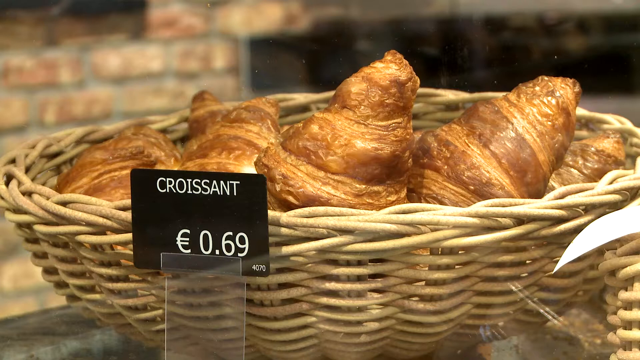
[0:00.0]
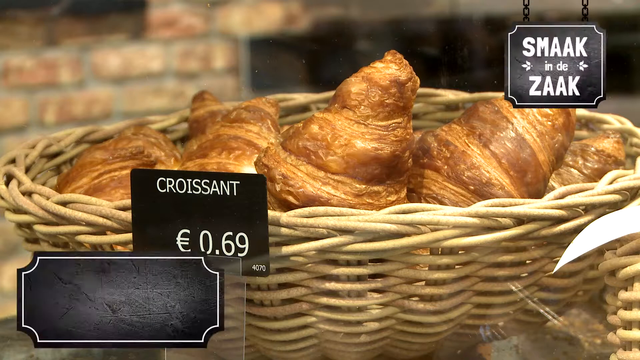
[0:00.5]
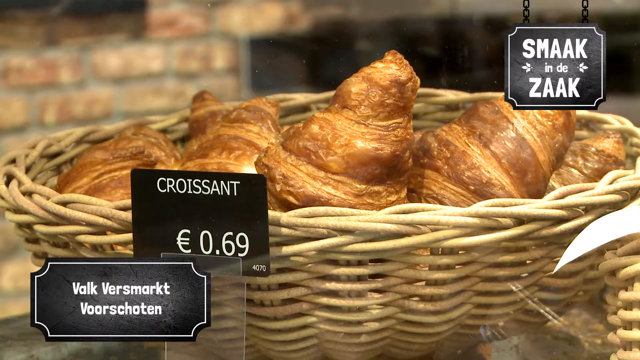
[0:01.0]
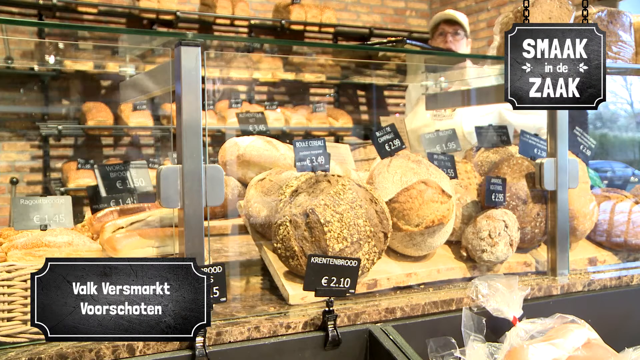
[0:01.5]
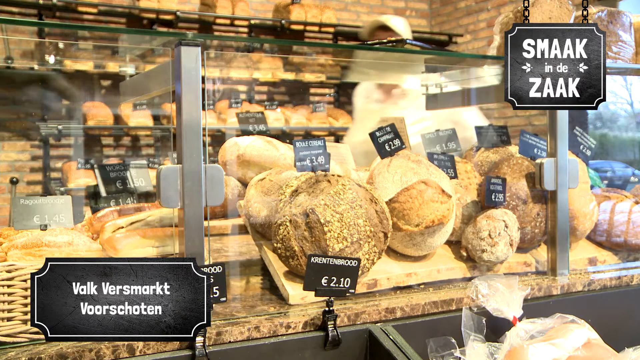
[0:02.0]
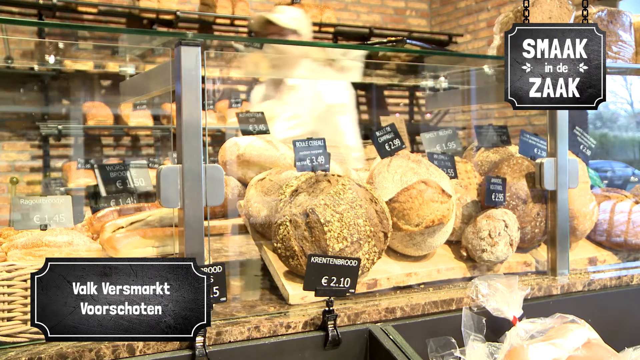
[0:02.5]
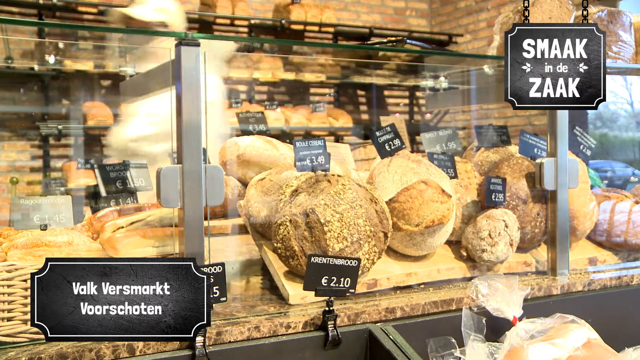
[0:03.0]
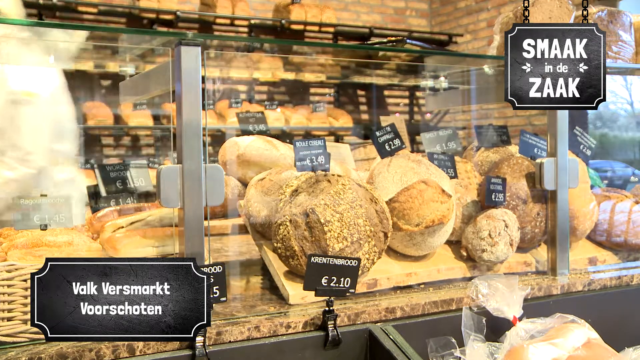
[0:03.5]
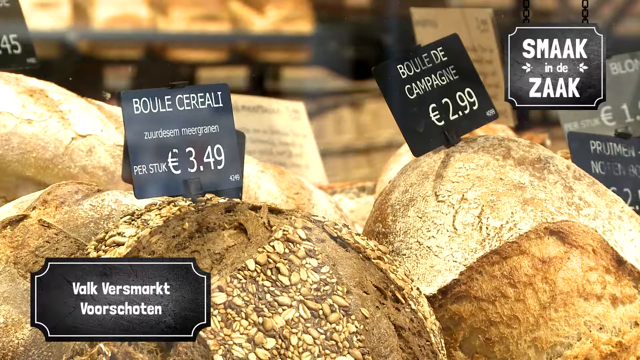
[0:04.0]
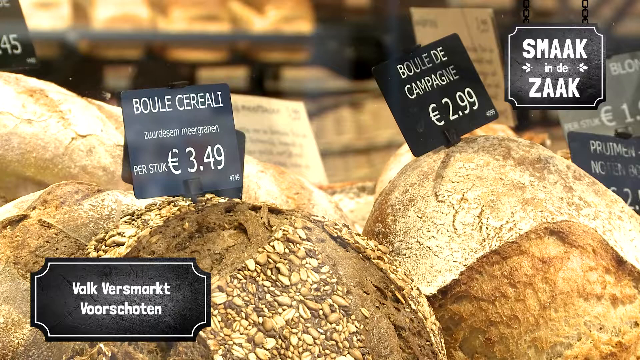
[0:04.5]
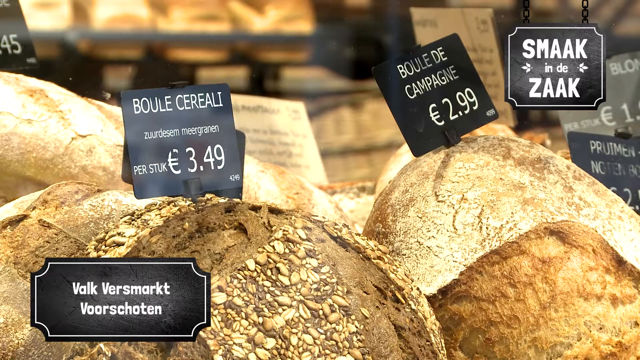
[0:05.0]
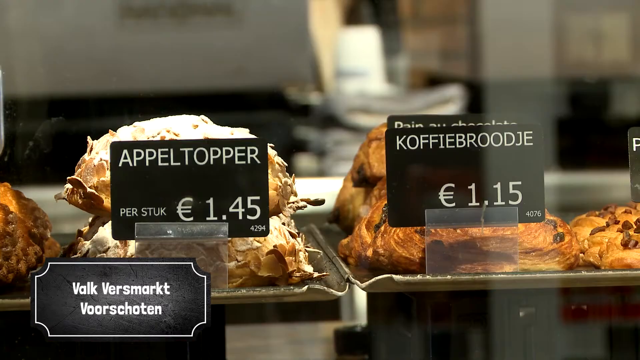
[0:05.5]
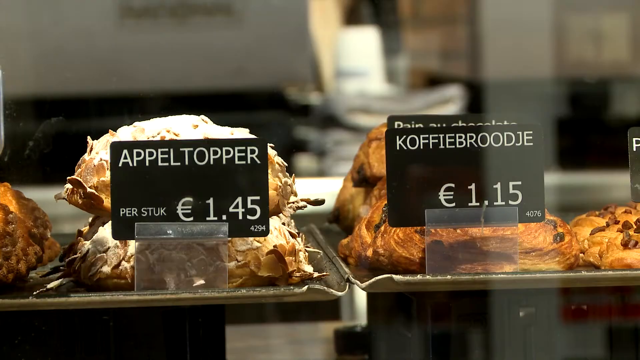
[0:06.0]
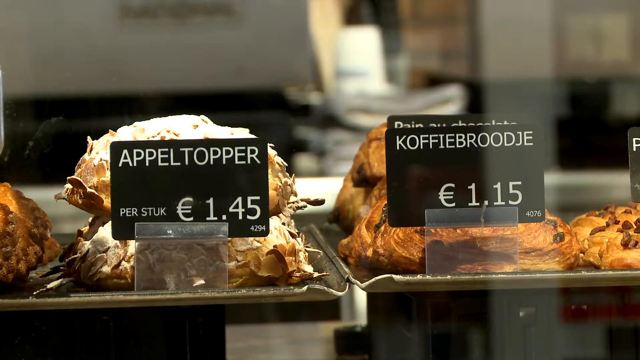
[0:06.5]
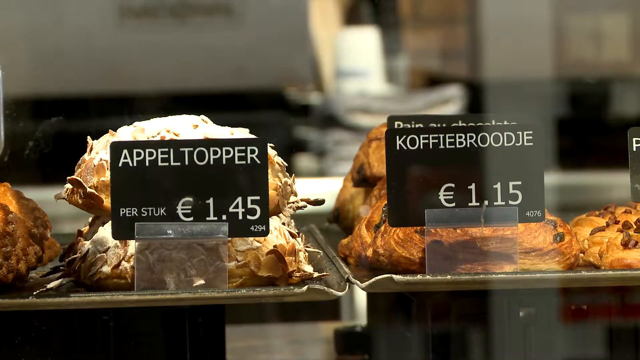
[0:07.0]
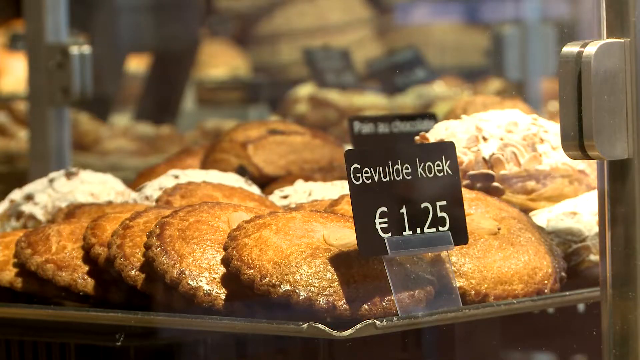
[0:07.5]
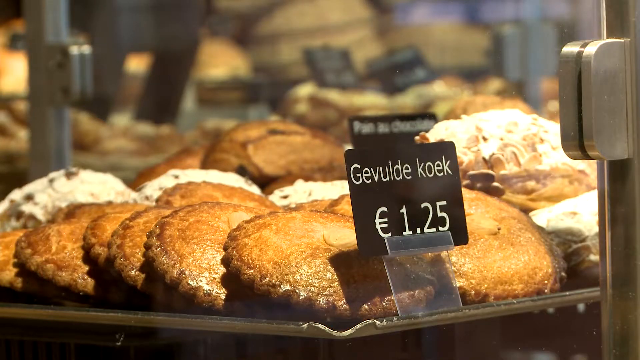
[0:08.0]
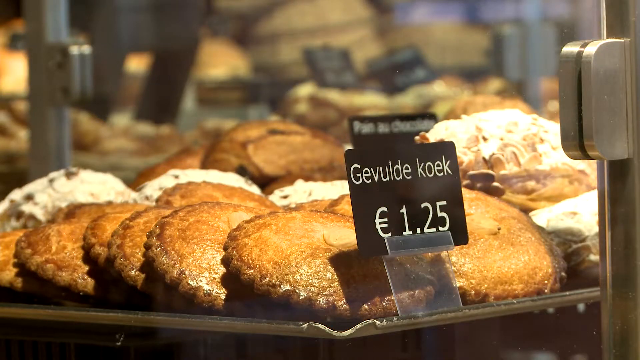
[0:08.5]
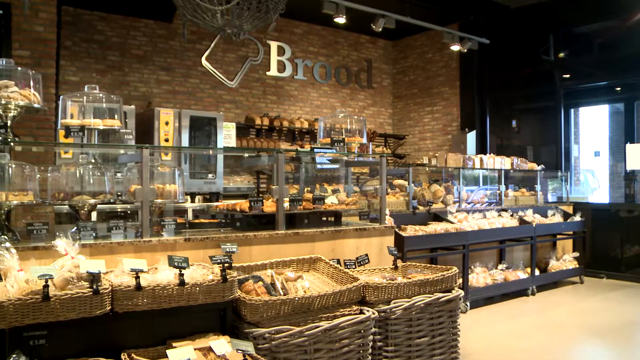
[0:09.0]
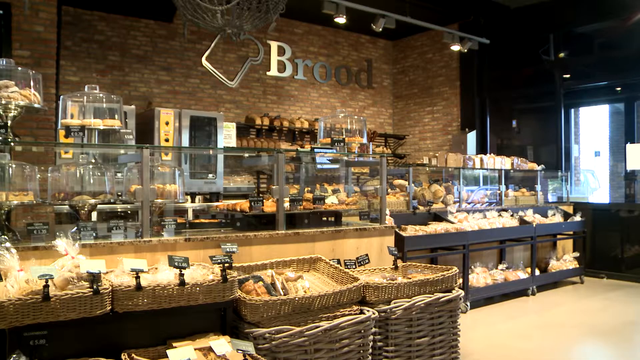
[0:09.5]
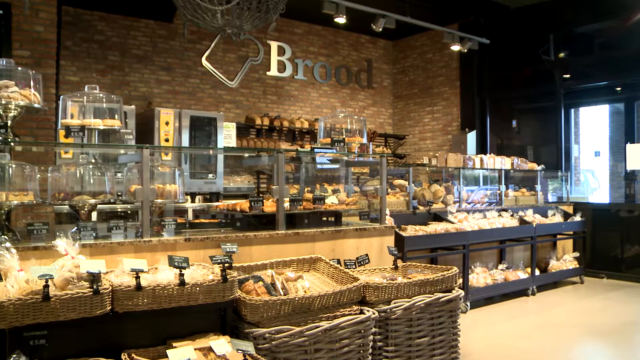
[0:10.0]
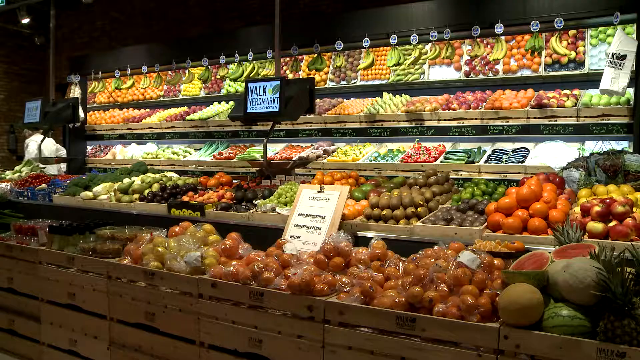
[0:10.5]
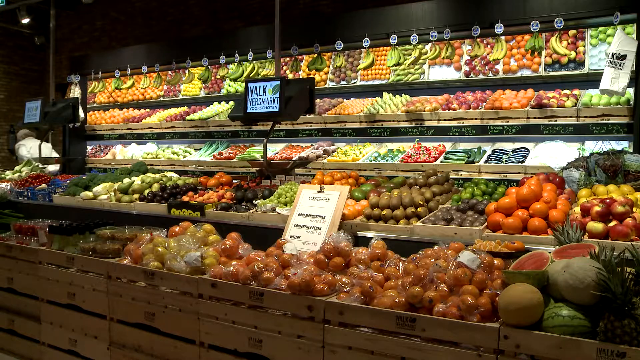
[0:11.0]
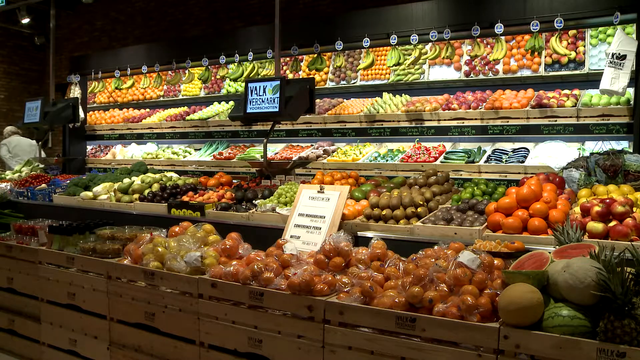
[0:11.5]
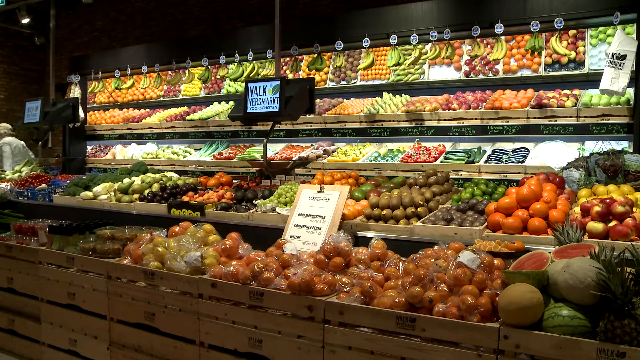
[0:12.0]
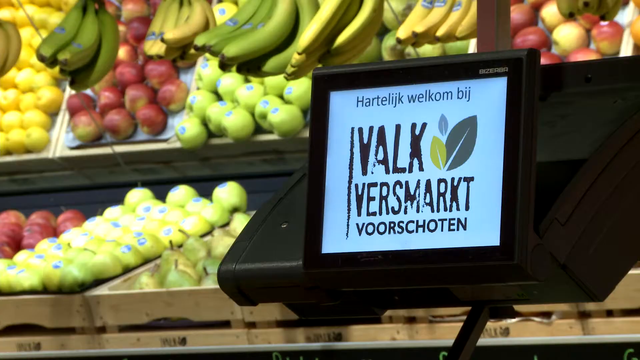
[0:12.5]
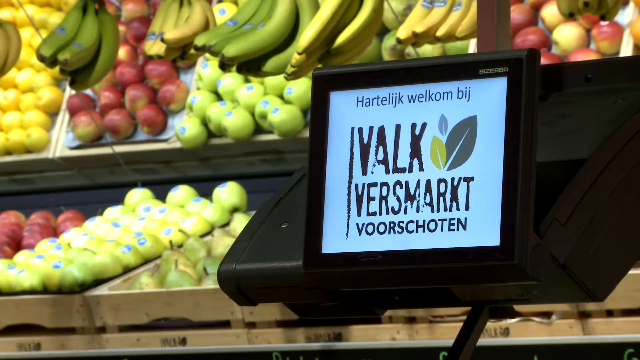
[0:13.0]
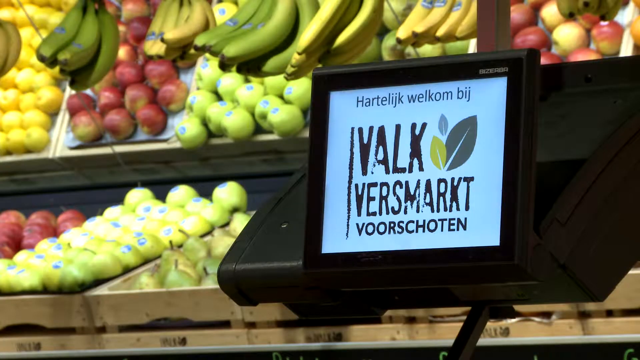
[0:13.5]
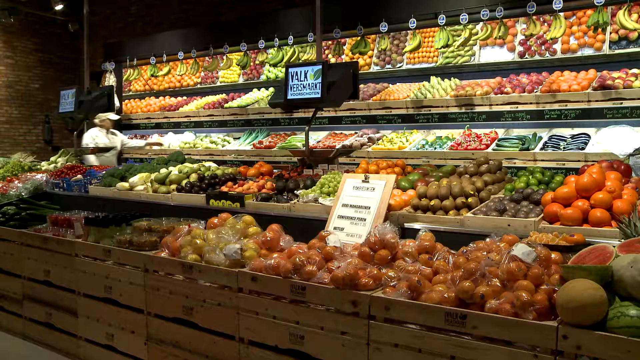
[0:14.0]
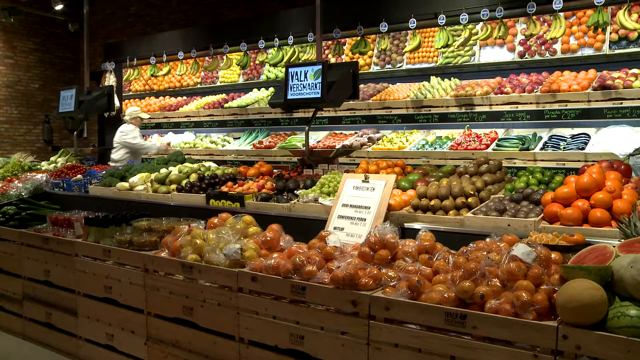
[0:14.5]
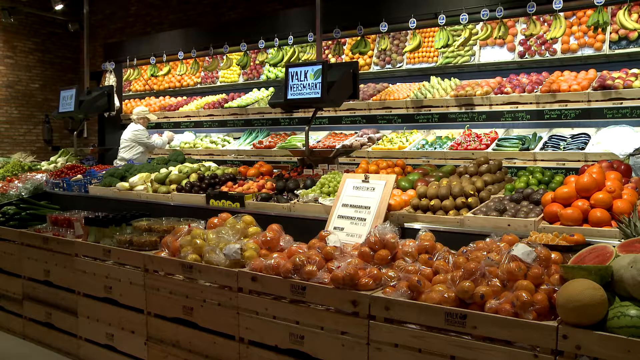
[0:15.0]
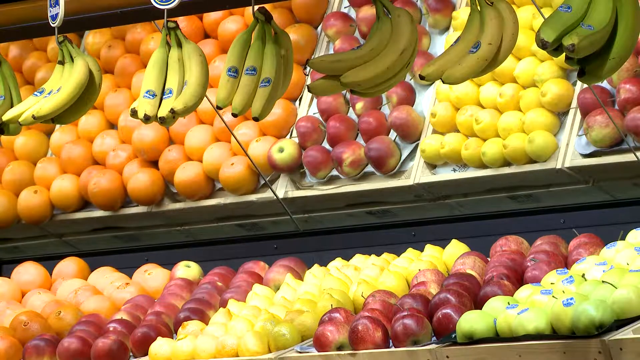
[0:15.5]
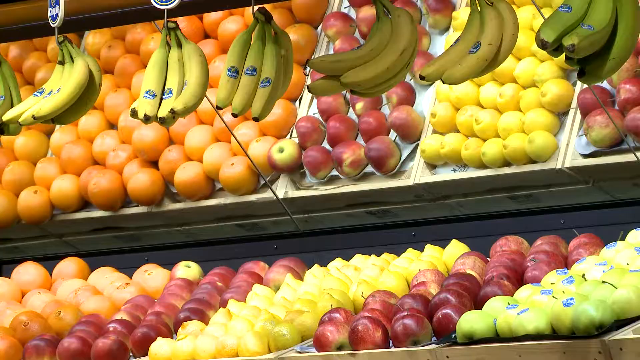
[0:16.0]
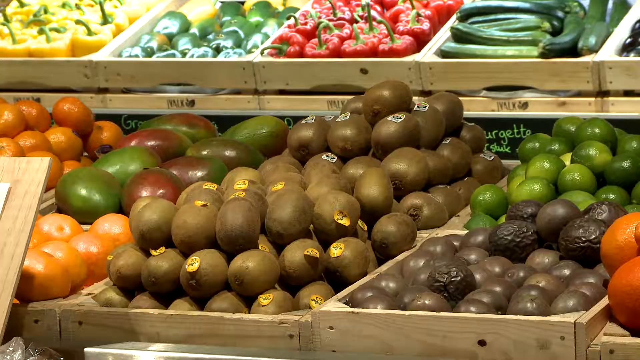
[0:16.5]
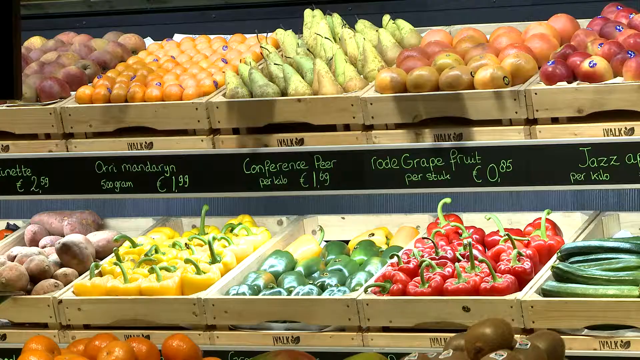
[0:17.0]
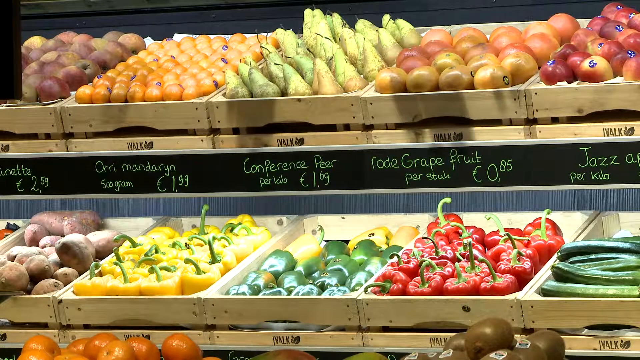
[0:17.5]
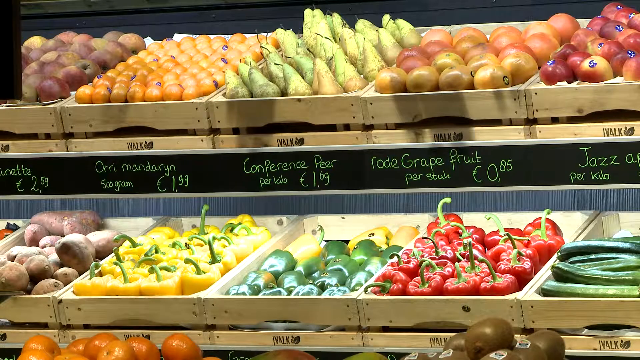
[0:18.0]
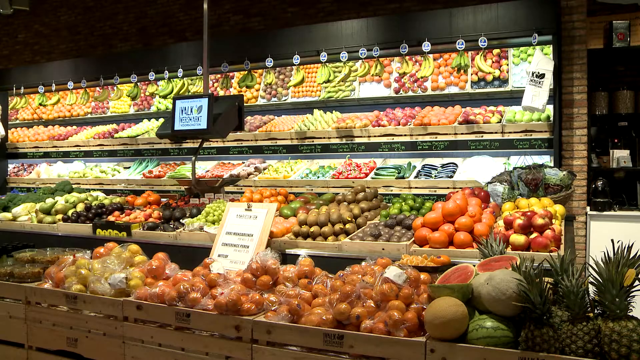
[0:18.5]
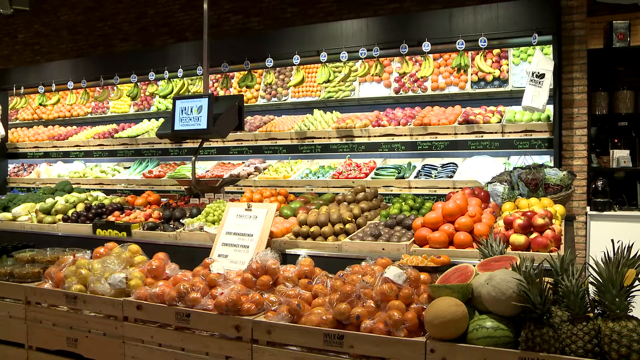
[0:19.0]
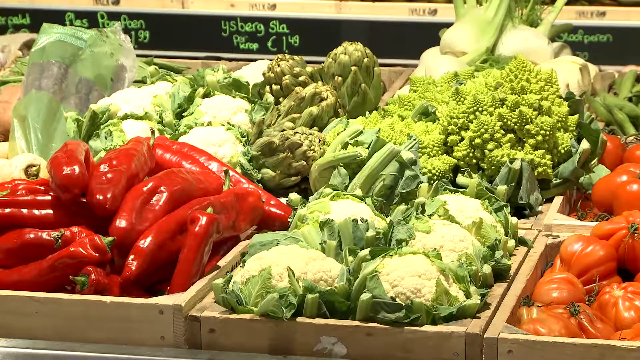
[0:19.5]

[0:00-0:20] The scene looks like a bakery, and the text on the labels appears to be German. Labels are on the different, really rustic-looking loaves of bread on display, and a baker walks back and forth behind the counter. It looks like a traditional sort of cafe or bake shop. The camera does a quick zoom out that shows the name of the place, "brewed", and it appears to also be a coffee place, looking like a fast casual dining area. There also seems to be a small market section with rows of vegetables and fruits, and baskets of bread are for sale there too.